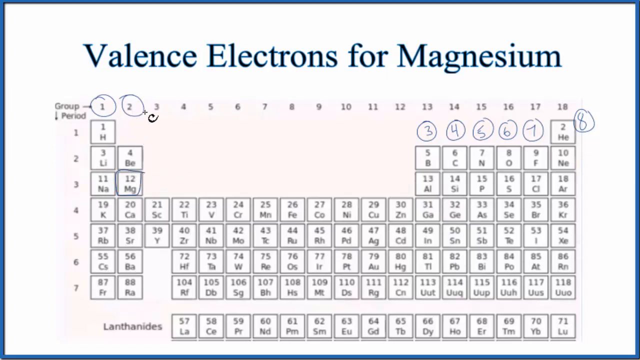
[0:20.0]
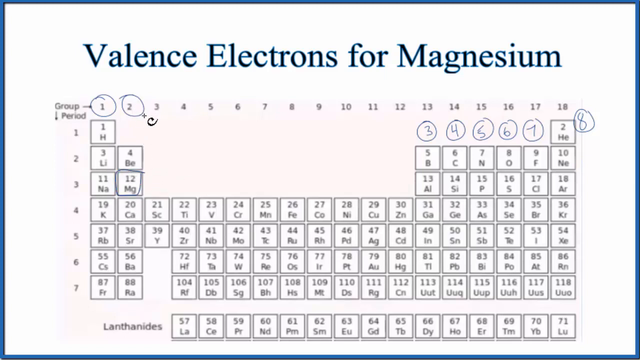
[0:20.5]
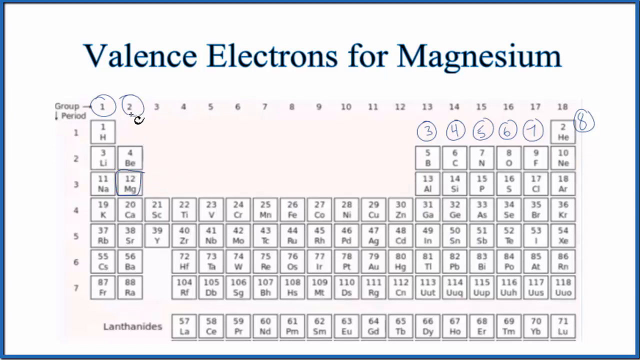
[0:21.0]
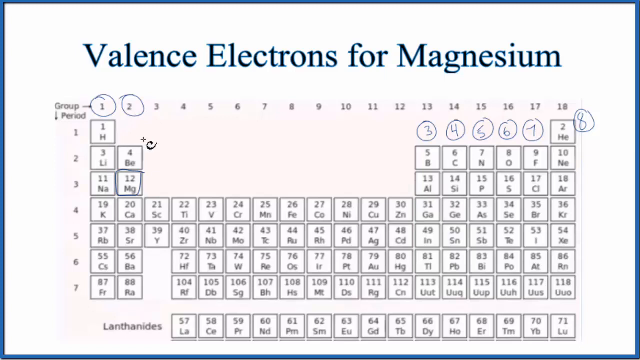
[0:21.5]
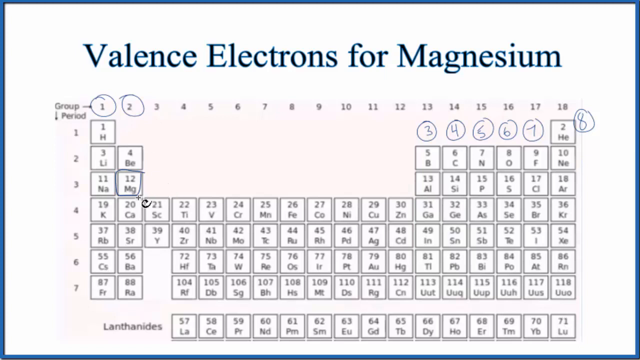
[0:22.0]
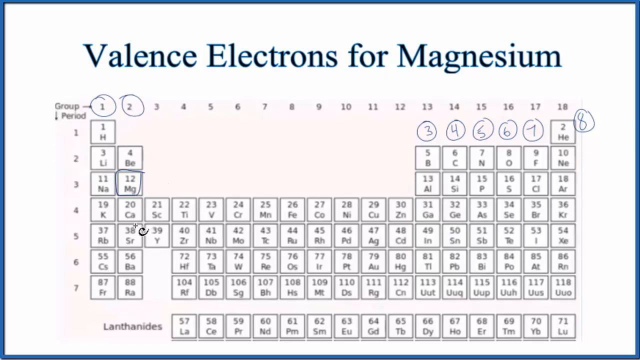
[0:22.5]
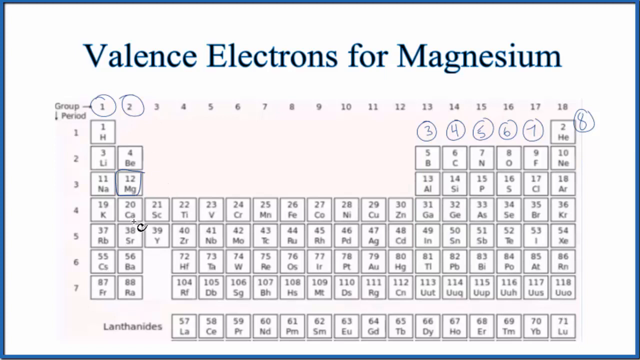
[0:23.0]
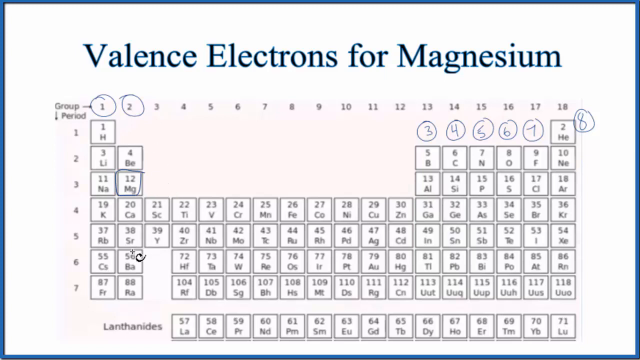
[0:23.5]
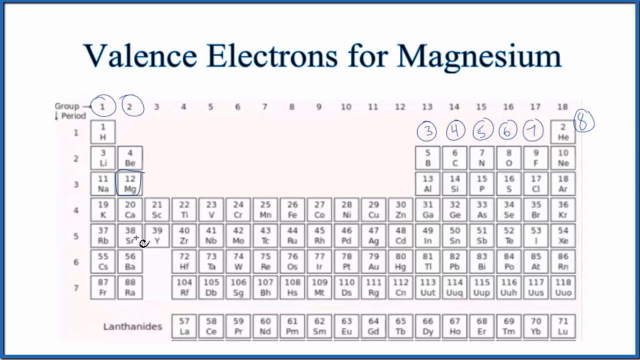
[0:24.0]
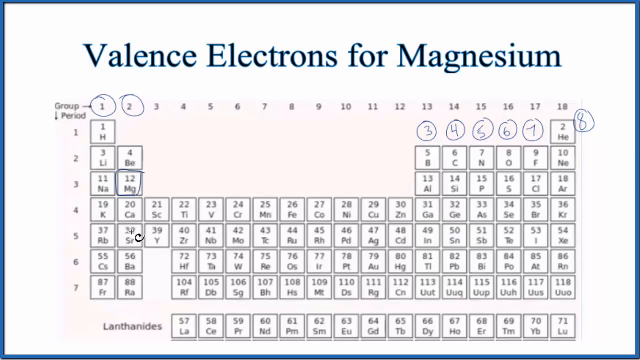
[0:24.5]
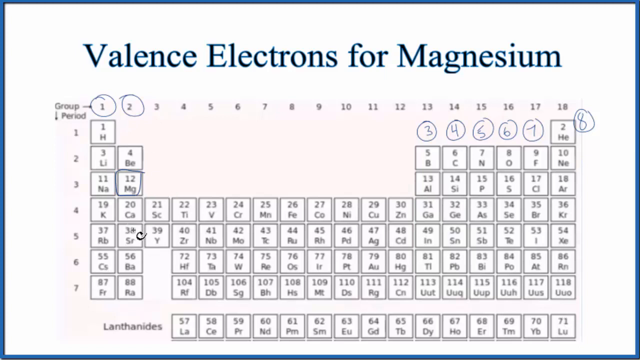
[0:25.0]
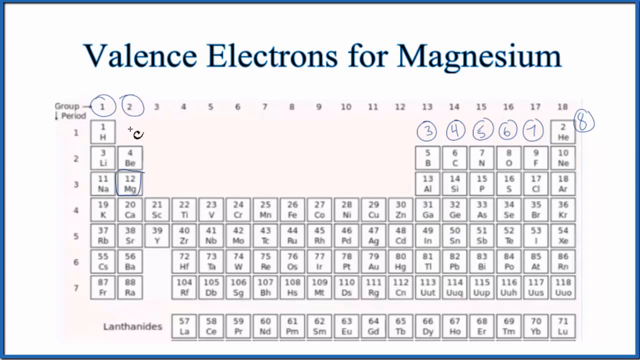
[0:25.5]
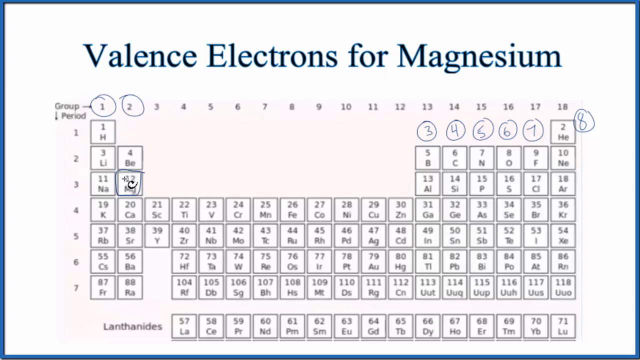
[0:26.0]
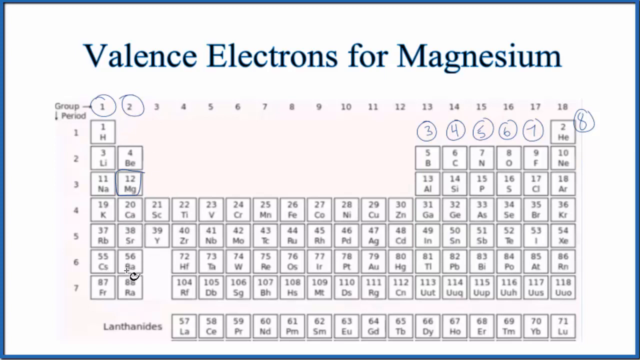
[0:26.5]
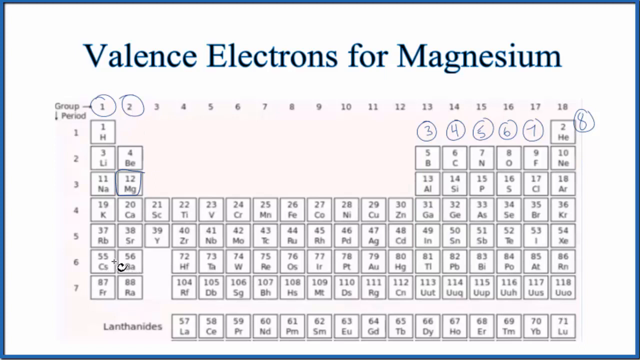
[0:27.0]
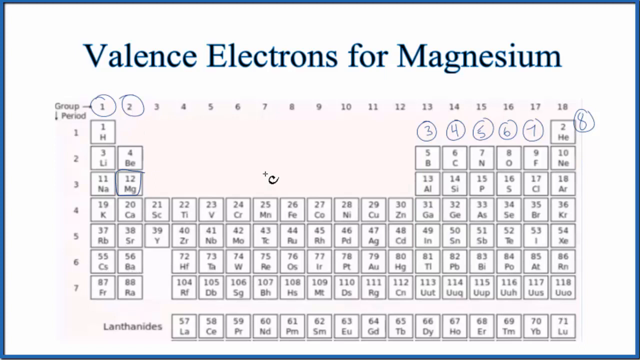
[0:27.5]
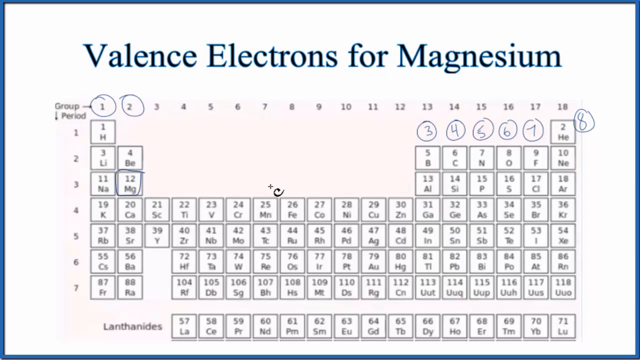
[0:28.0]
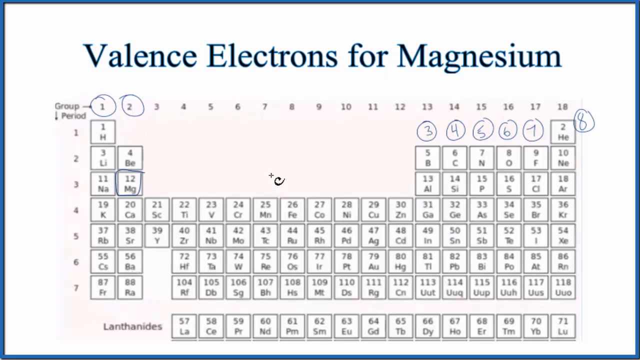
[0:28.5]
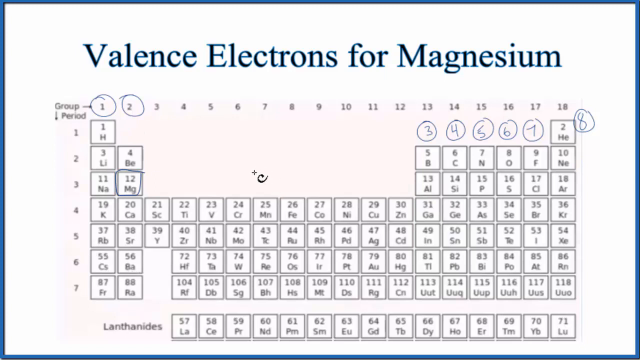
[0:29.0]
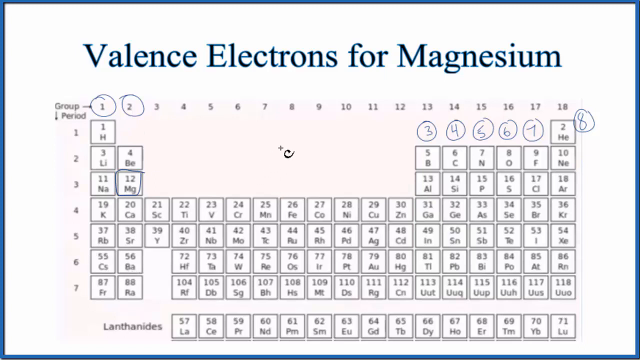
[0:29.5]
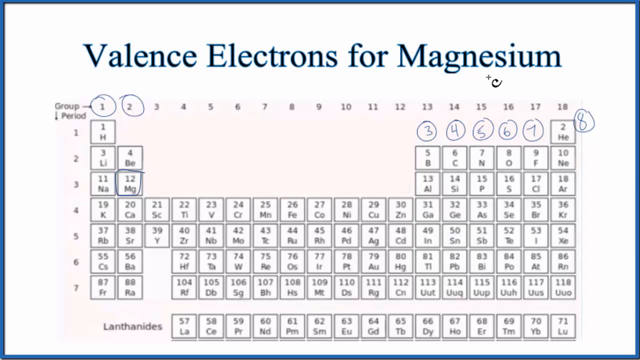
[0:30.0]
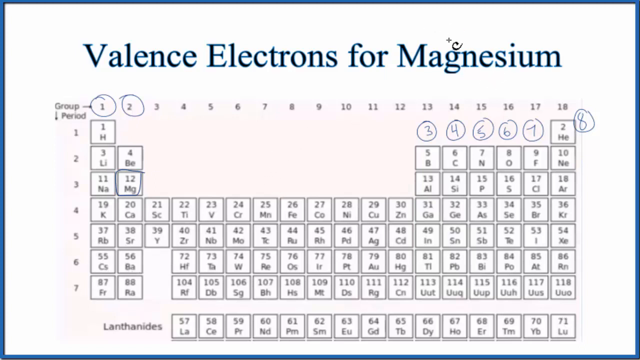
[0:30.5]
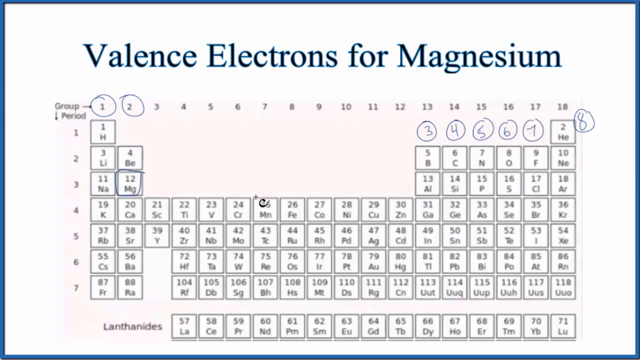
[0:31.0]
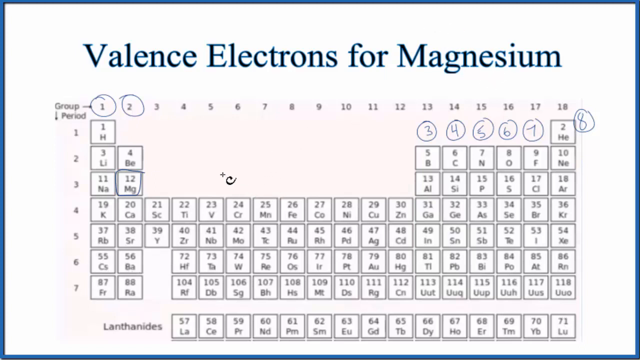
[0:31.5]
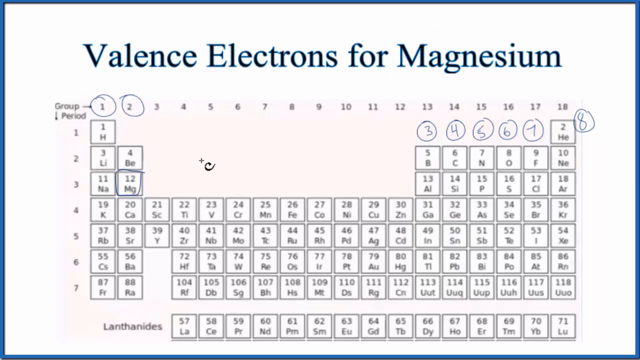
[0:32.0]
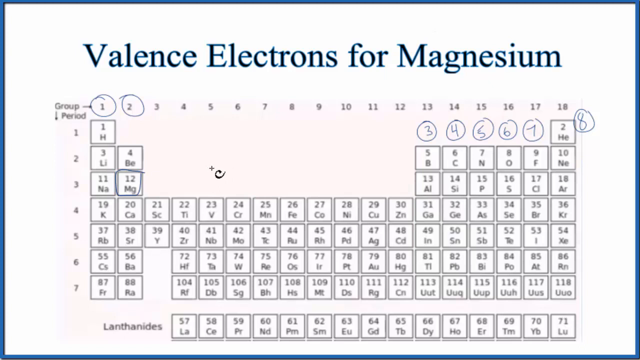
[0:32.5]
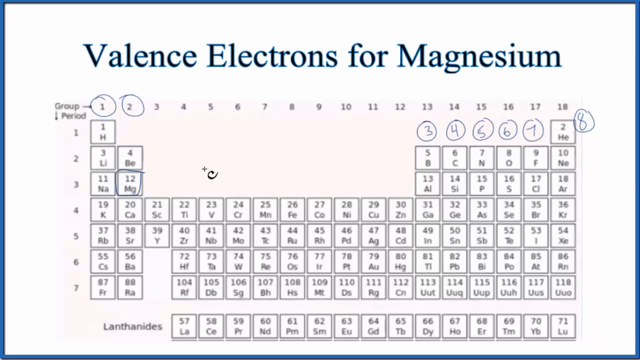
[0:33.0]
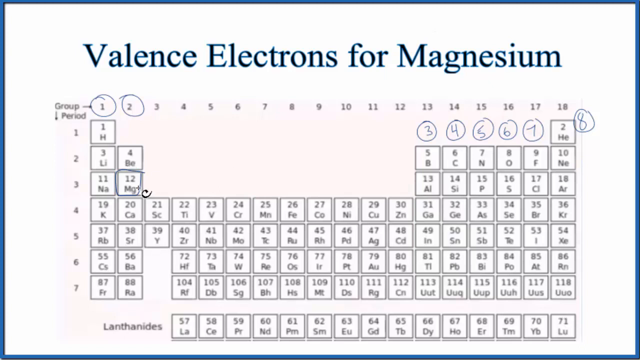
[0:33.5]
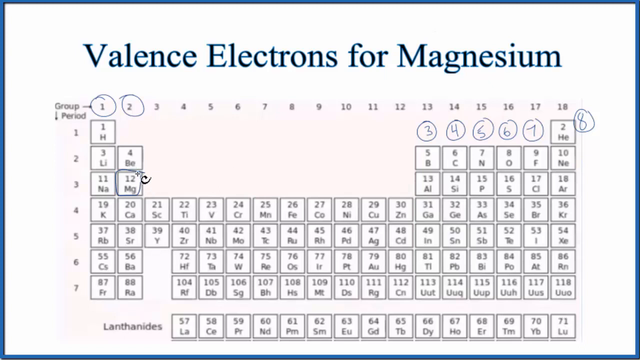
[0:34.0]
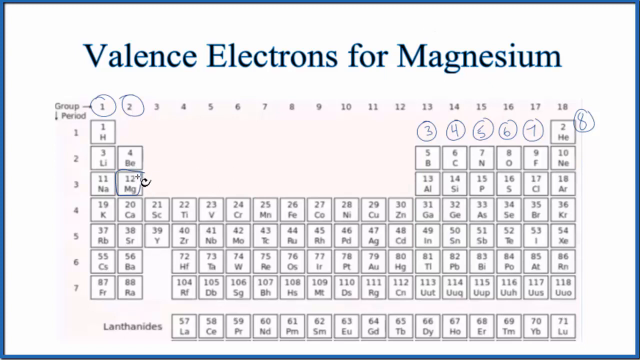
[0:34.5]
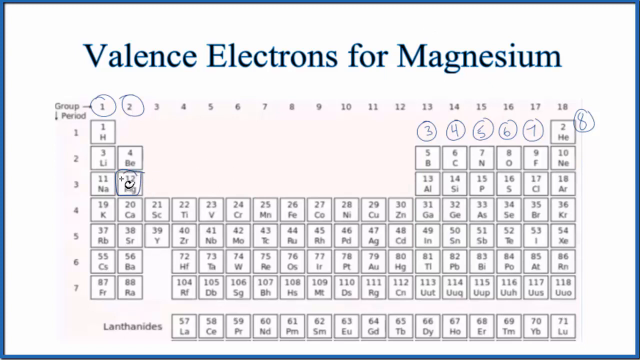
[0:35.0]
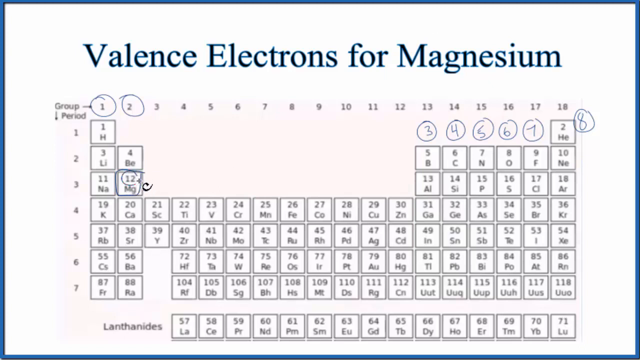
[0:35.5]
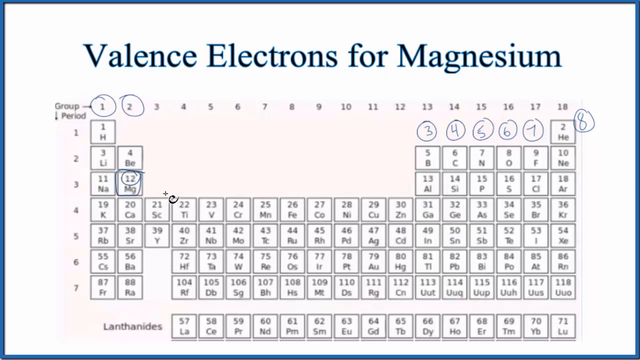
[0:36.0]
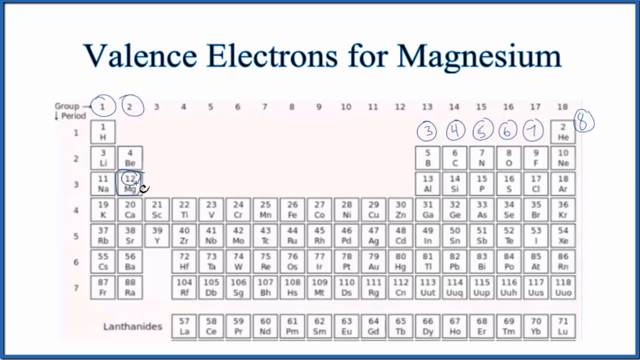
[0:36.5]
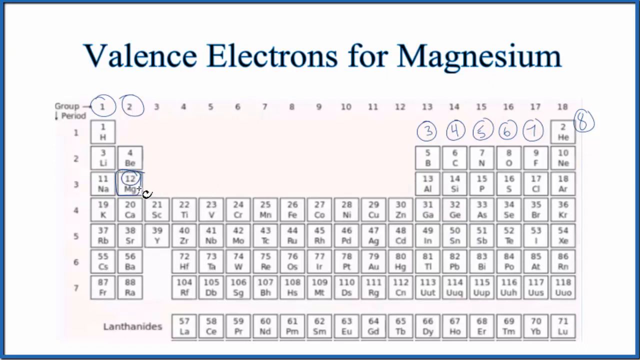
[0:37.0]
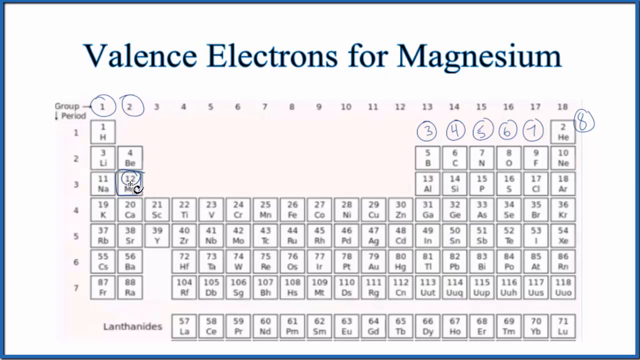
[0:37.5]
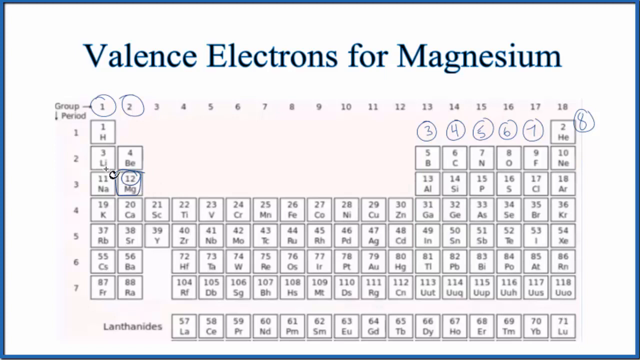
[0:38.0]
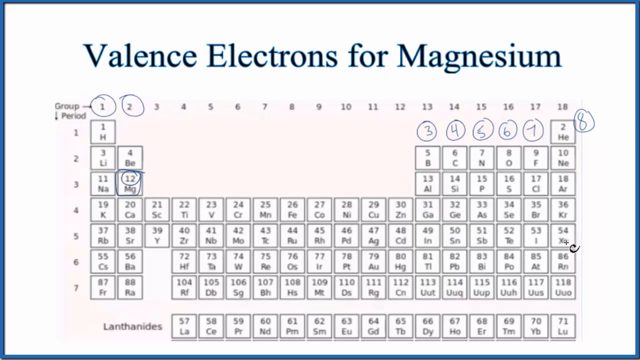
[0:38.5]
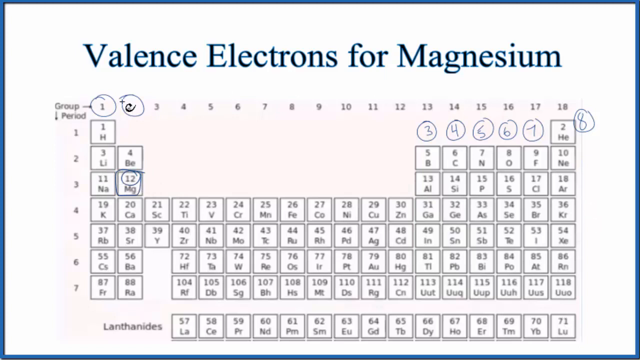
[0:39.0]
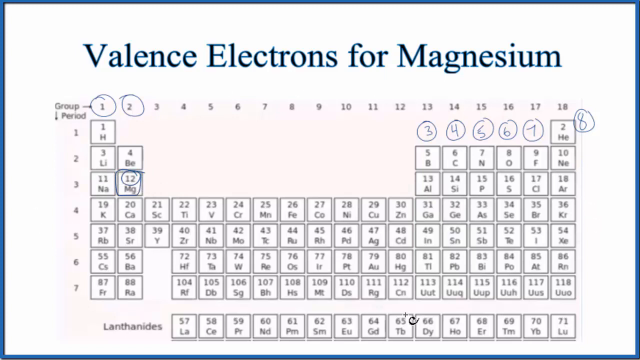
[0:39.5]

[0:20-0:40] A picture of the periodic table appears on a white background, with a title in black text reading "valence electrons for magnesium." The columns seem to be numbered 1 through 18 and the rows 1 through 7. The numbers of columns 1 and 2 have blue circles around them, and under the 13th through 18th columns are handwritten numbers 3, 4, 5, 6, 7 and 8, circled in blue. Element 12, magnesium, in the second column and third row, appears to have been circled in black ink. A cursor that looks like a black plus sign with a C at its bottom right goes down to what looks like the second column, goes to the circled number 2, and makes a counterclockwise circle around it. It slowly moves down column two to number four, over element 38, Sr, then goes all the way back up. It then goes down to element 56, Ba, and to the sixth row, then up to the top right, where it makes a counterclockwise circle around the word "magnesium." The cursor goes back to the magnesium element and circles the number 12 in the Mg square, then makes a huge counterclockwise circle around the whole periodic table.